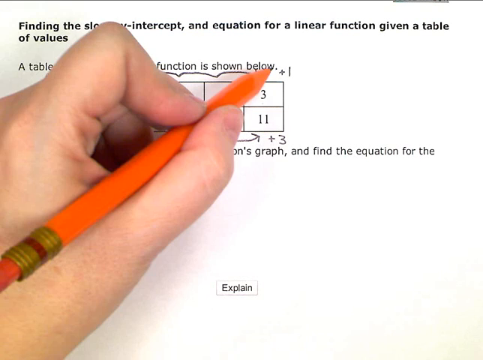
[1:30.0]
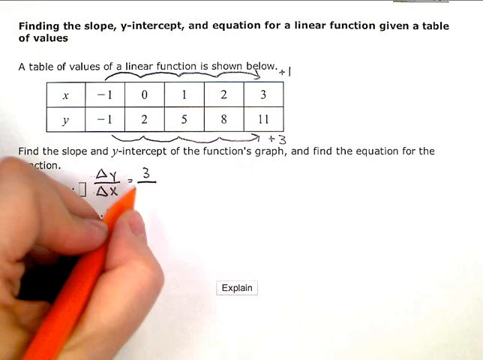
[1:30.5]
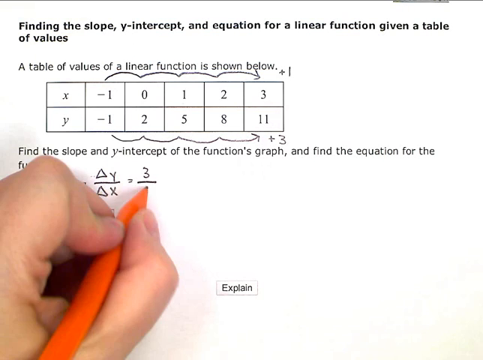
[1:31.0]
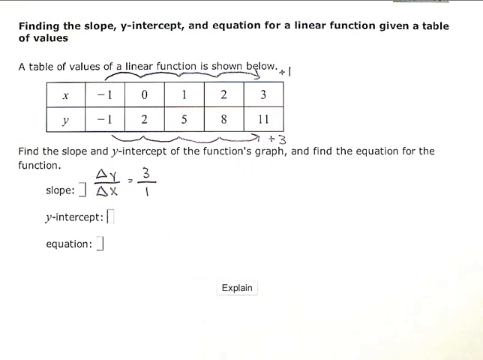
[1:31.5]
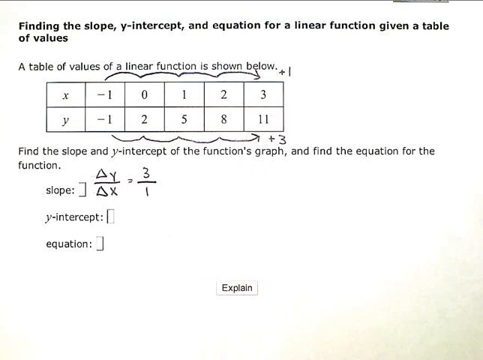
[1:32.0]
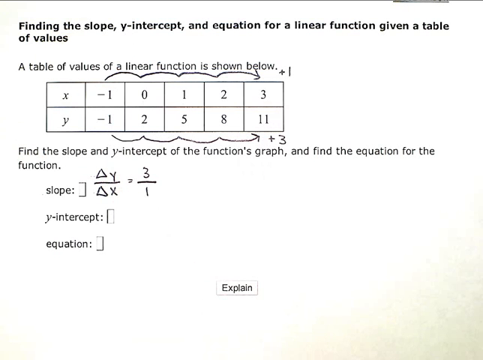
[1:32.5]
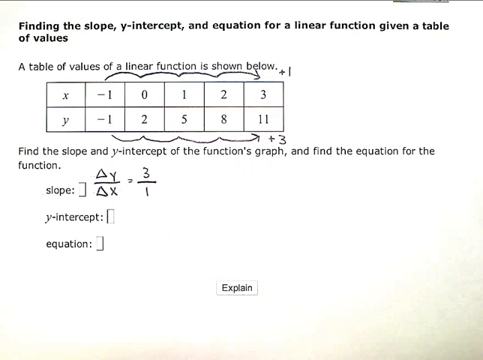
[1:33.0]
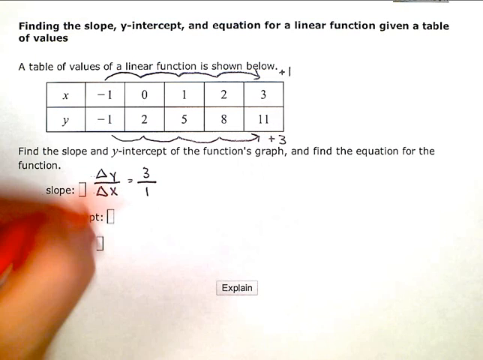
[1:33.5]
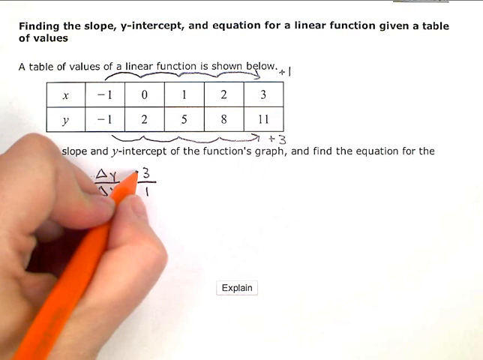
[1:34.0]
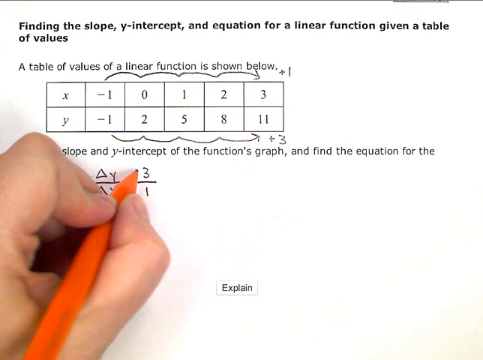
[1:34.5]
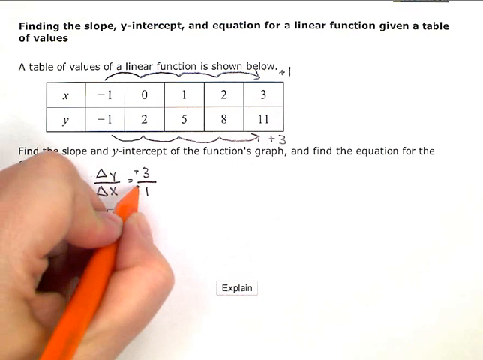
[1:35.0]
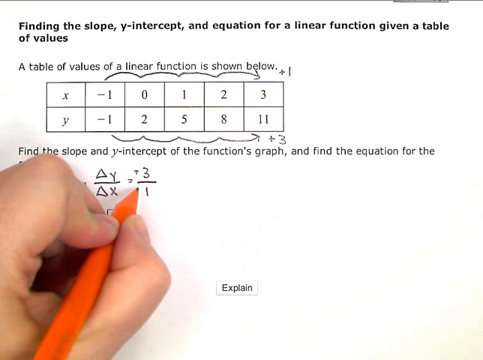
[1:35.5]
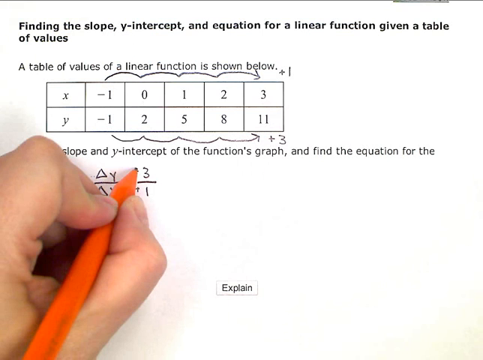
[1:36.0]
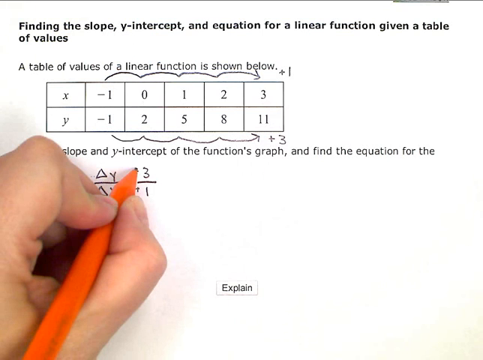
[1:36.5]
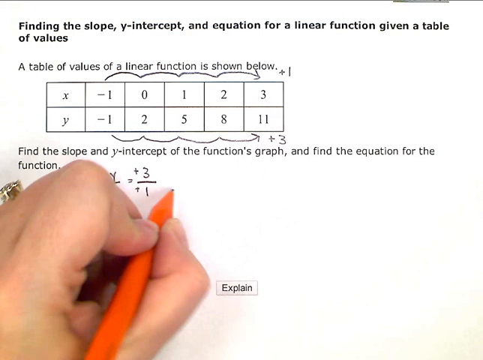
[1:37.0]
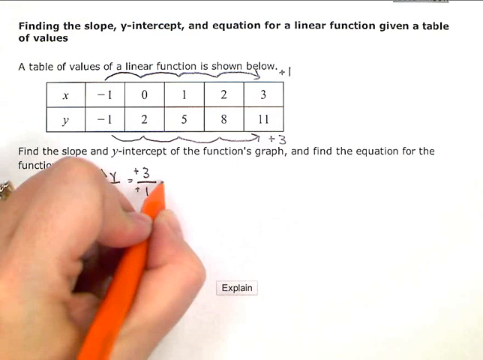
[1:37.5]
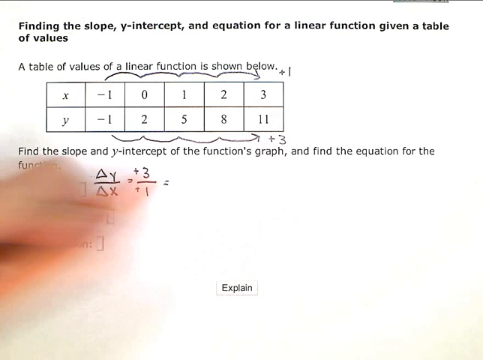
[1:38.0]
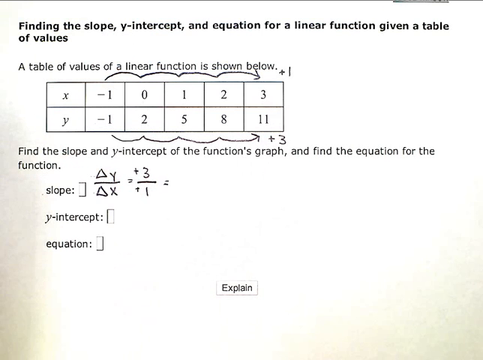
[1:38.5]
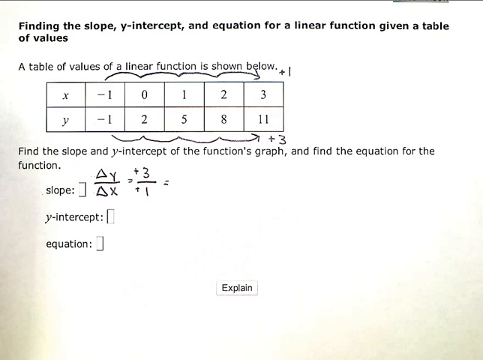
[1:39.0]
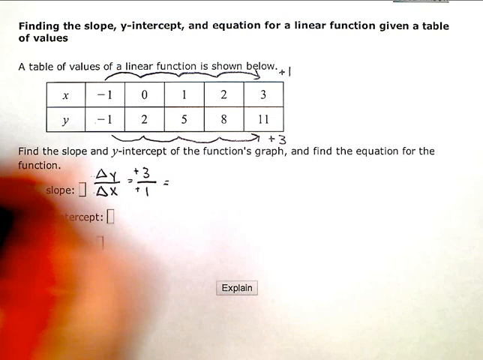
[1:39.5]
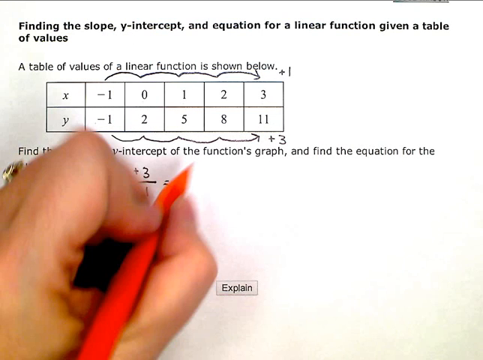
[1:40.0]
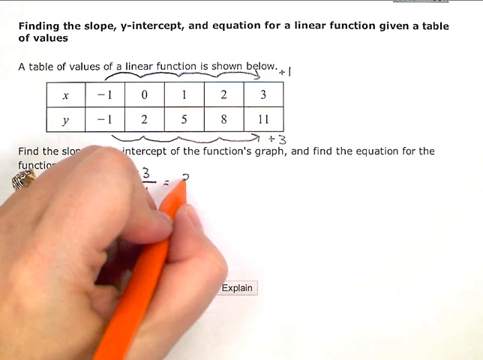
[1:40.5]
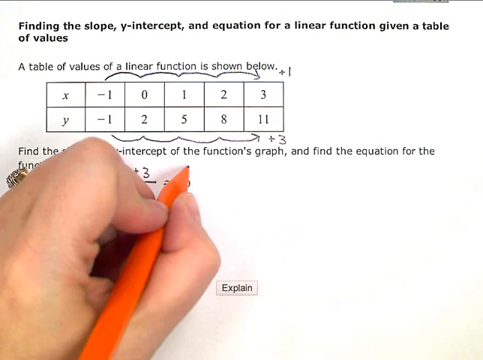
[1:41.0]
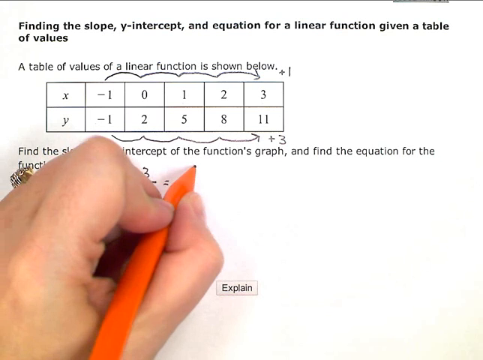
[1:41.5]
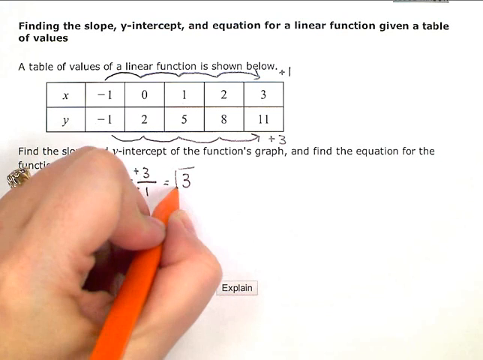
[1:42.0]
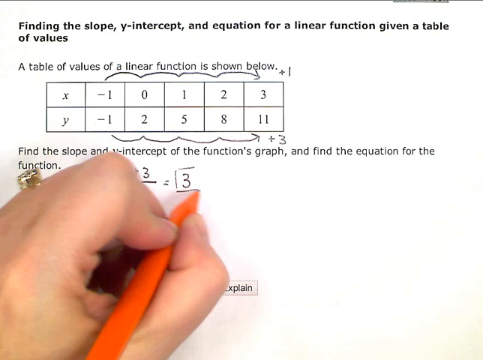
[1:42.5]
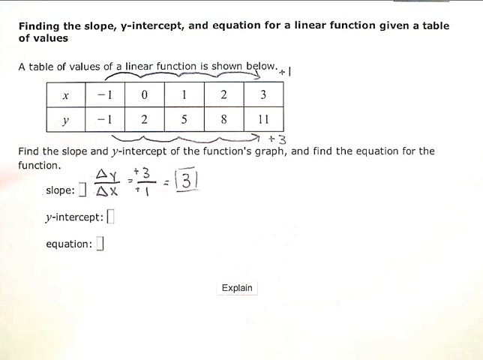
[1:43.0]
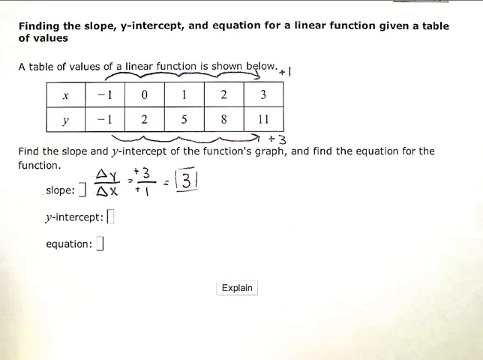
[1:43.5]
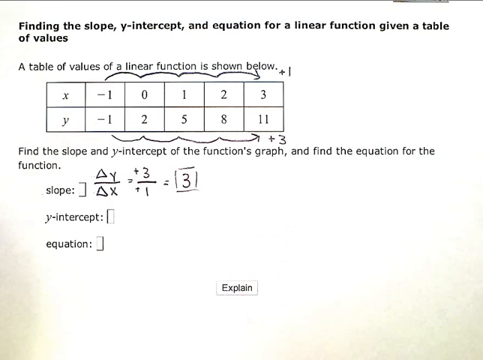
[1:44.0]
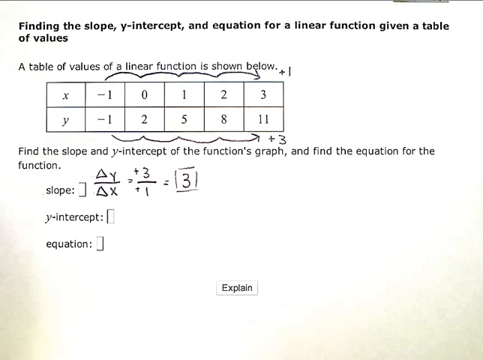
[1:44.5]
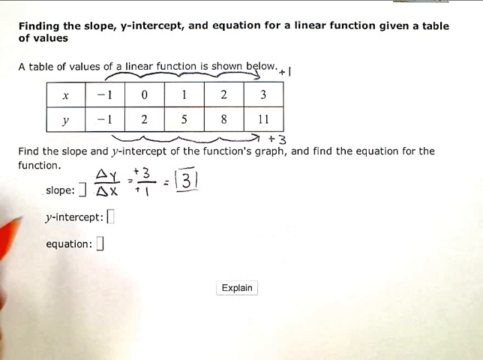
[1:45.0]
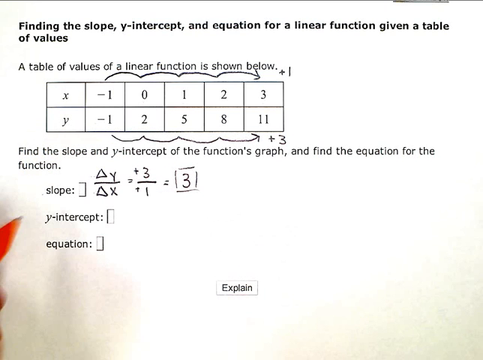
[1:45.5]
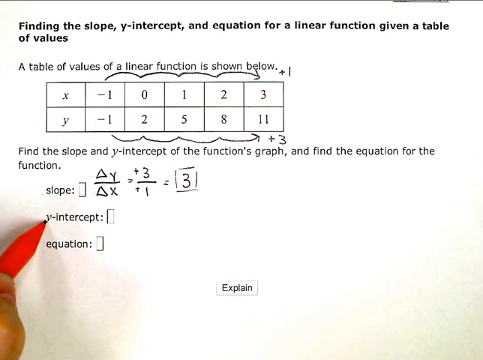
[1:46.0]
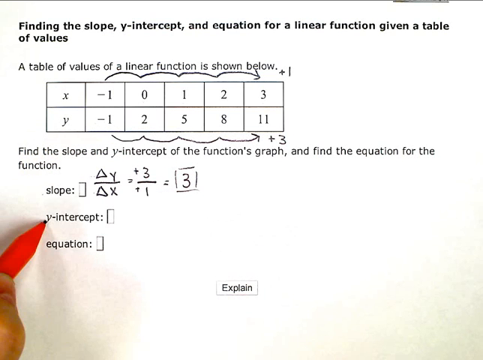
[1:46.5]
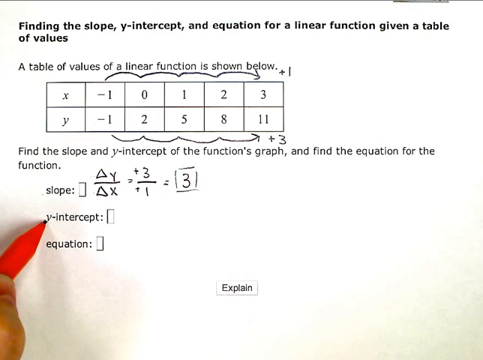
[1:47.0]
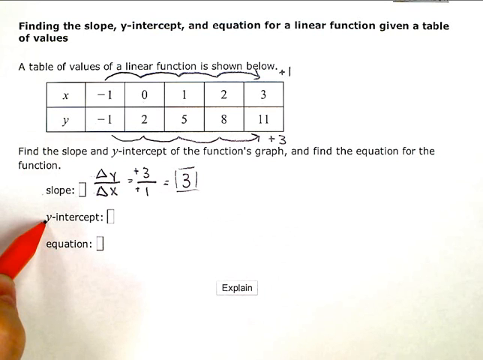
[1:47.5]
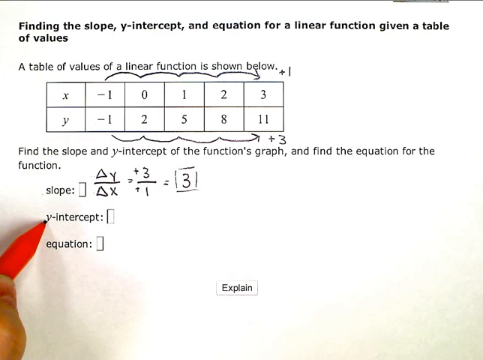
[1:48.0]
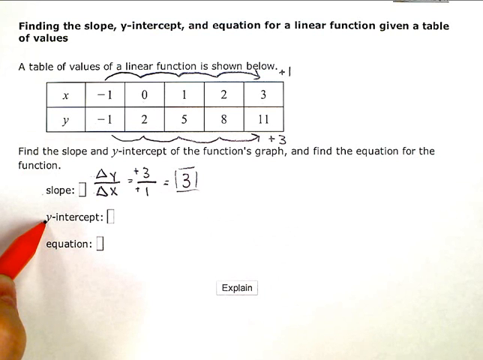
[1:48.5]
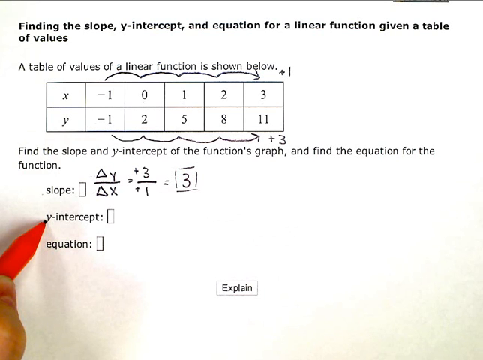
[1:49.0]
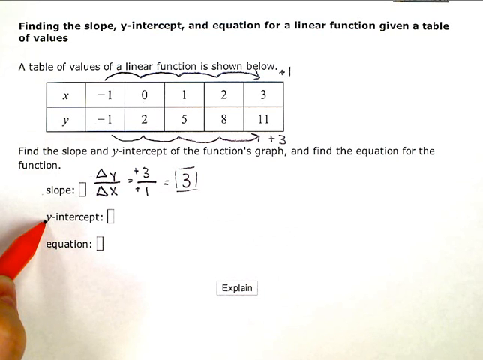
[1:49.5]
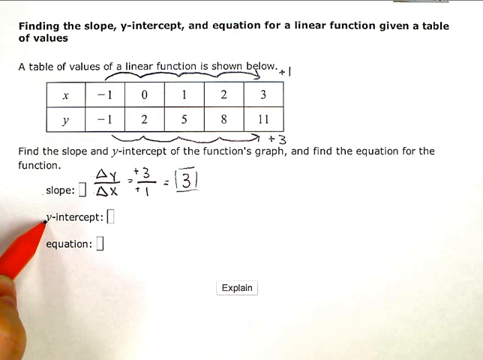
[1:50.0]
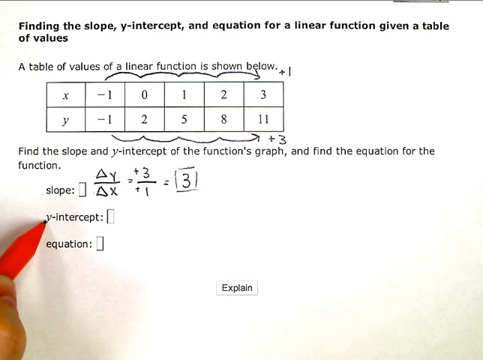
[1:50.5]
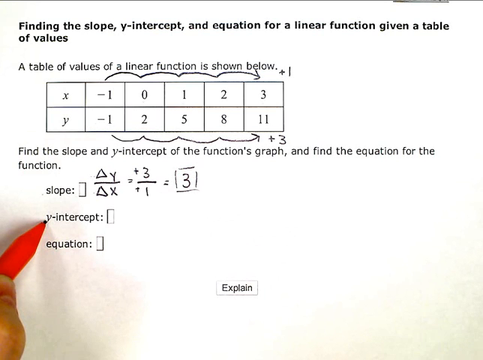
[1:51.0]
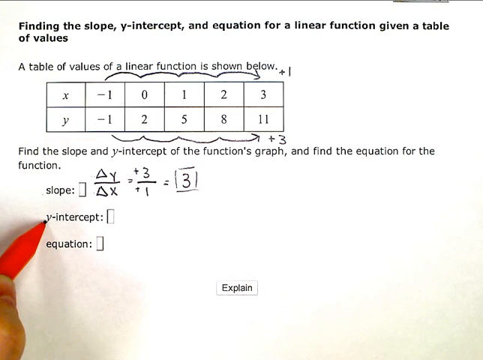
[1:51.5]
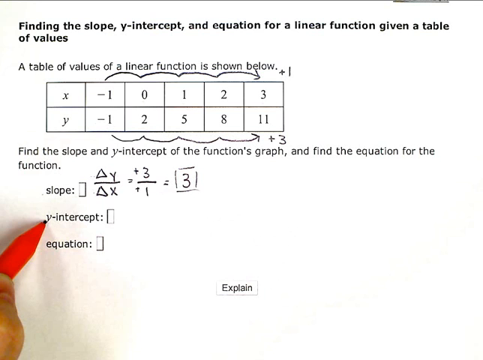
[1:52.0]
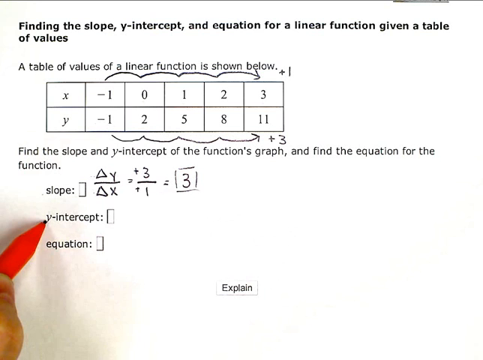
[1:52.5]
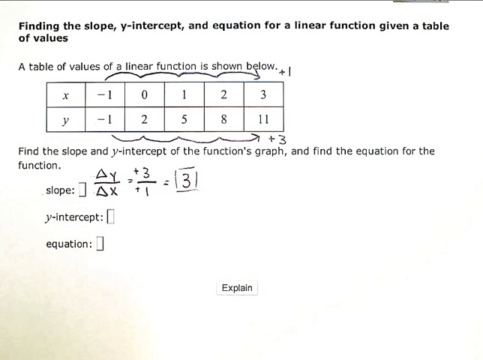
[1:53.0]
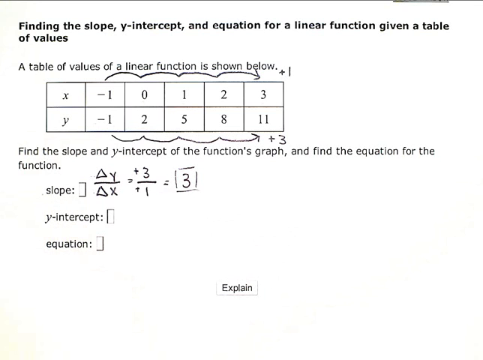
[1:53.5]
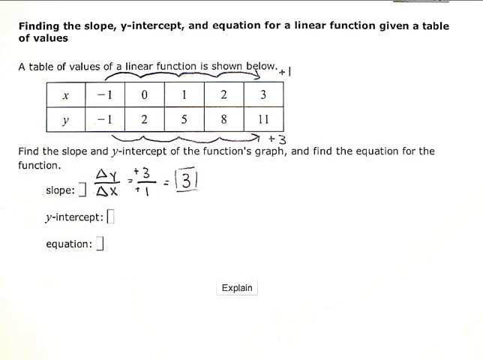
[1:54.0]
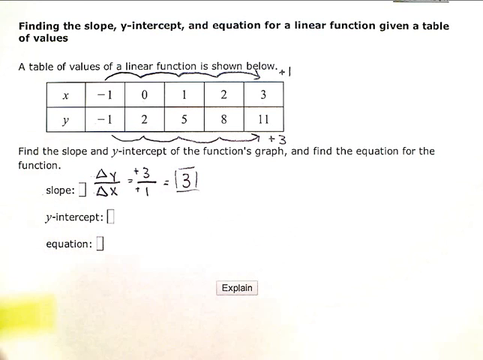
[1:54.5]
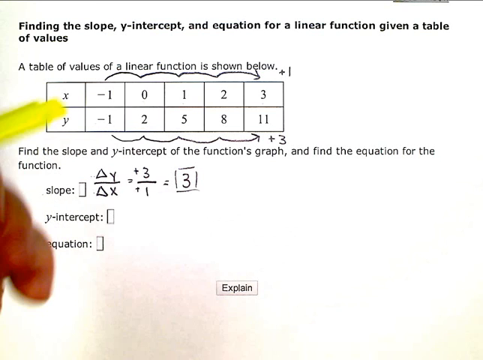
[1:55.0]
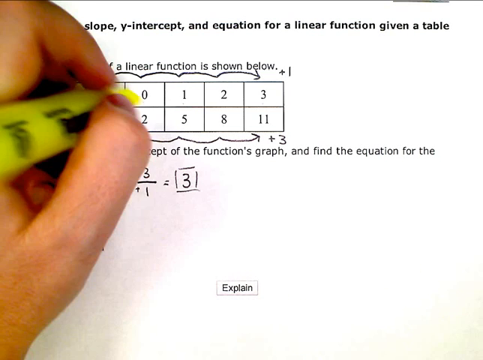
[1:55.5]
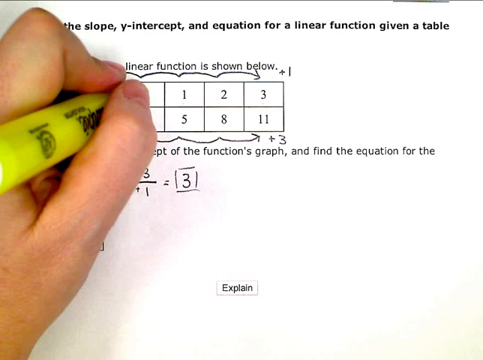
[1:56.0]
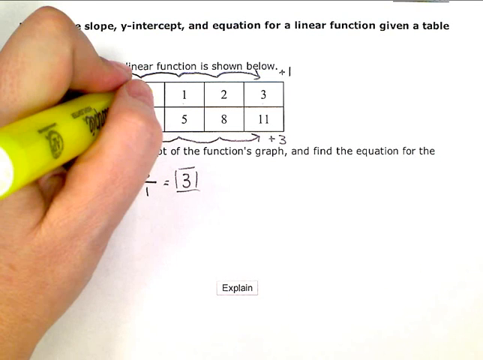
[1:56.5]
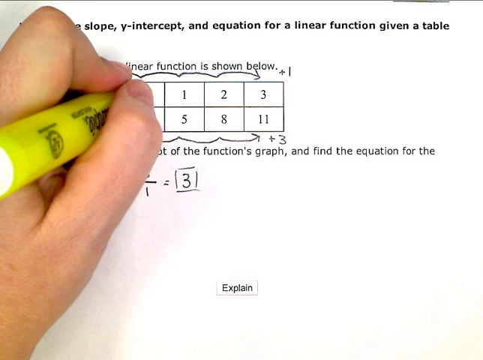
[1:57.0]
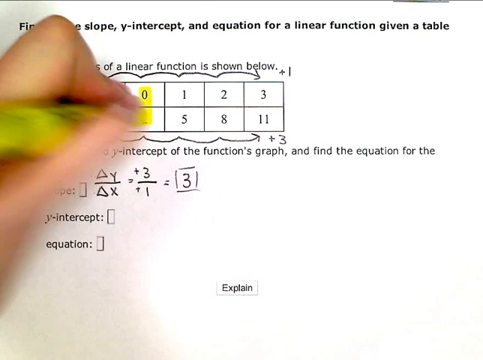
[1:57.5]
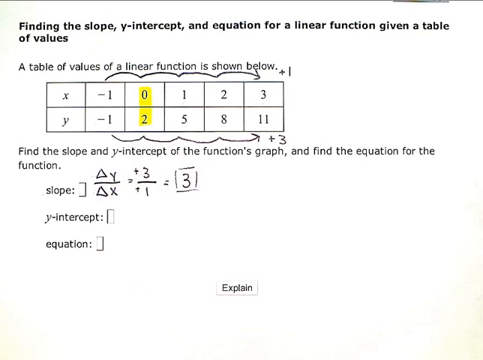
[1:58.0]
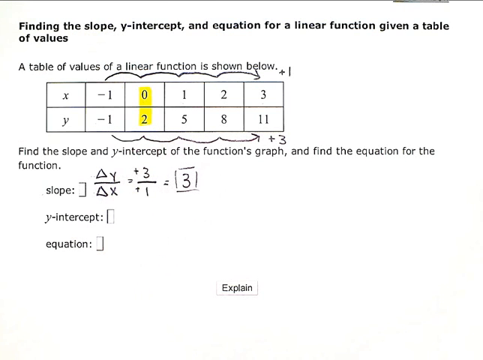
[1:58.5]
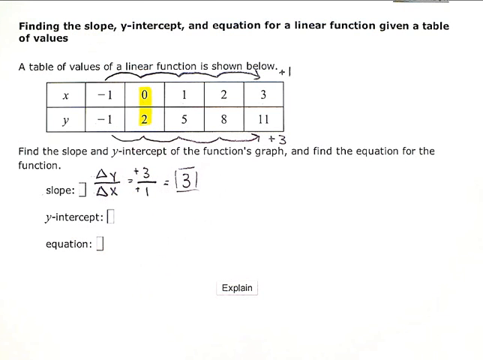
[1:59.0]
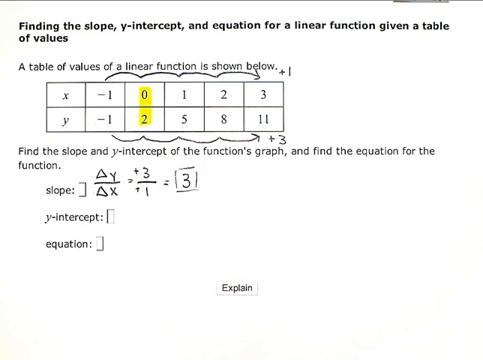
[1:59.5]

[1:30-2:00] An assignment called "finding the slope, y-intercept, and the equation for a linear function given a table of values" is shown, with a table of values of a linear function below comparing y and x. The x values are -1, 0, 1, 2, 3, each greater than the previous by 1, and the y values are -1, 2, 5, 8, 11, each greater by 3. The man writes with a pen. Below is the task to find the slope and intercept of the function's graph and find the equation for the function. The slope is delta y over delta x, and the man writes equals +3 divided by +1, which equals 3. He puts the 3 in a square, then takes a pen and marks 0 and 2 in yellow boxes. An explain button is at the bottom.